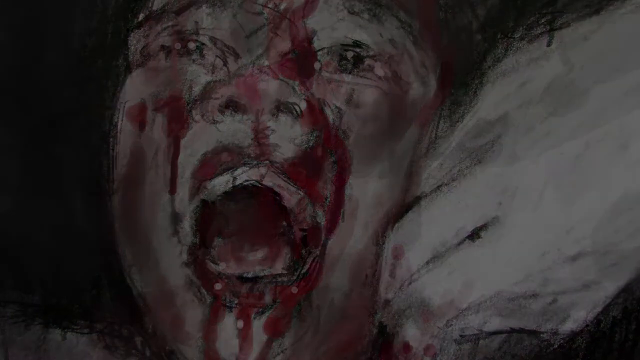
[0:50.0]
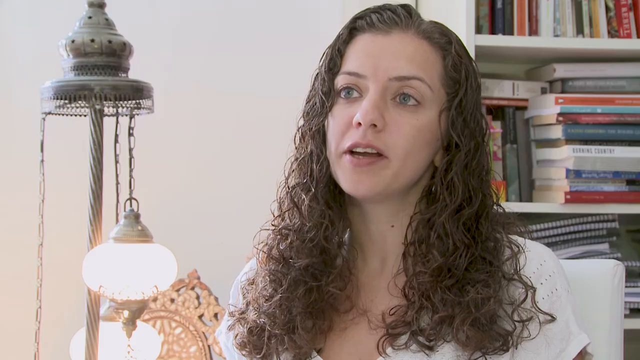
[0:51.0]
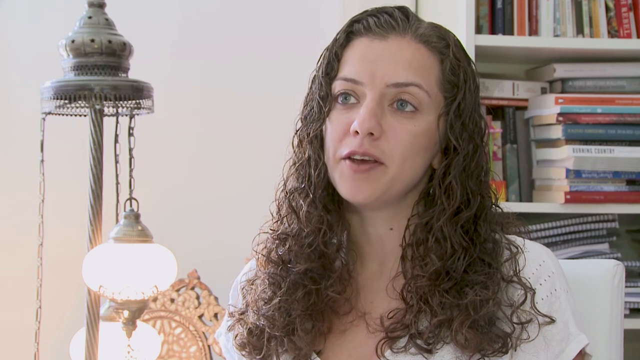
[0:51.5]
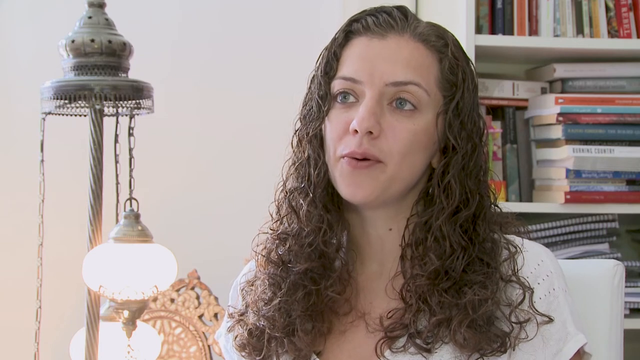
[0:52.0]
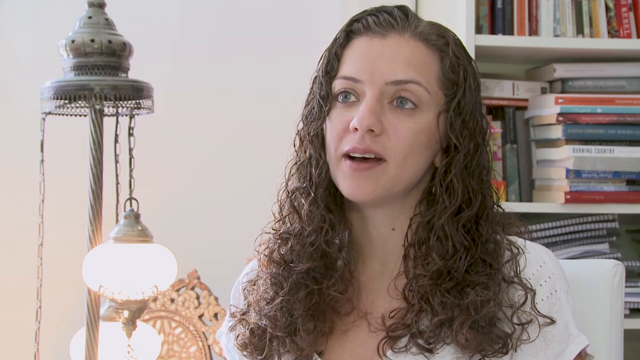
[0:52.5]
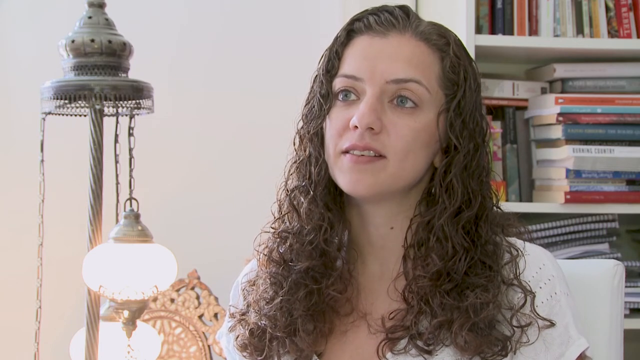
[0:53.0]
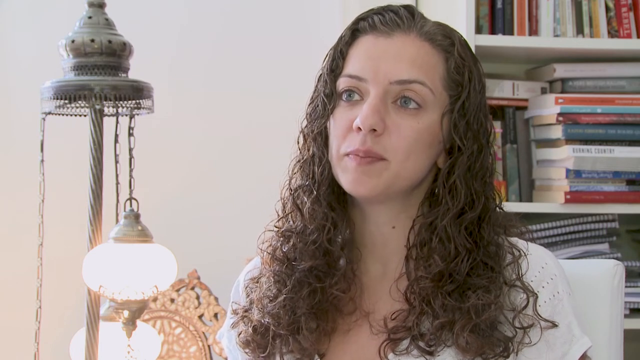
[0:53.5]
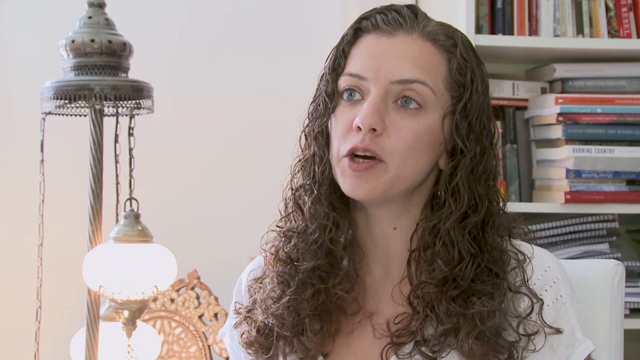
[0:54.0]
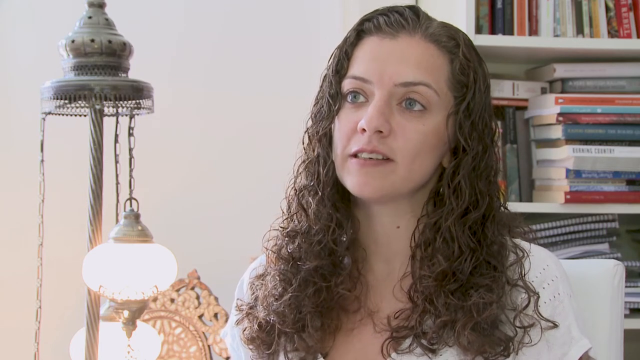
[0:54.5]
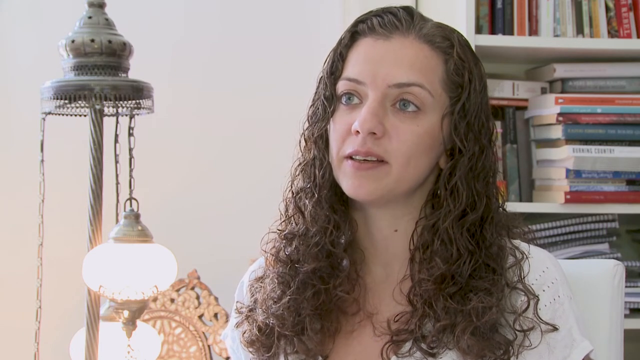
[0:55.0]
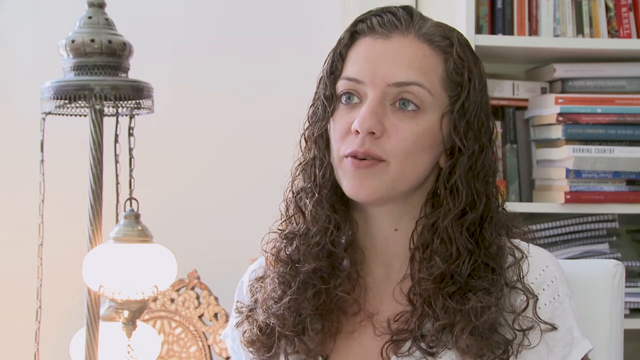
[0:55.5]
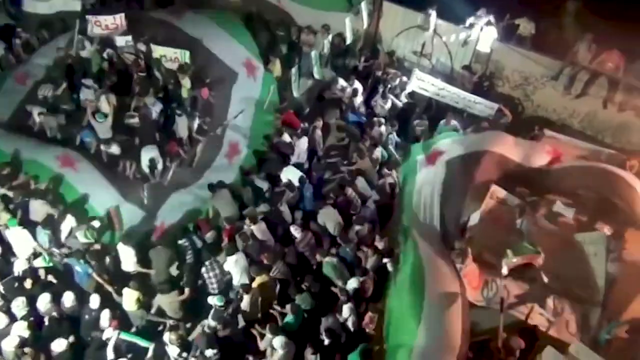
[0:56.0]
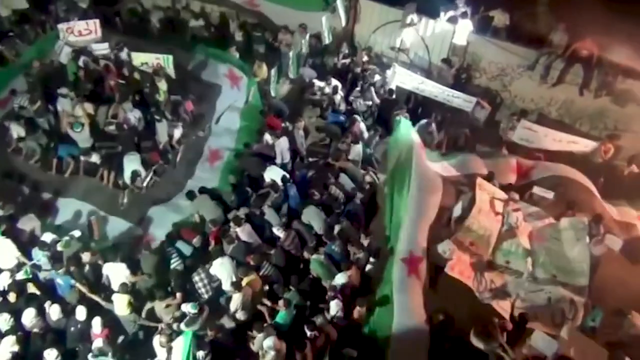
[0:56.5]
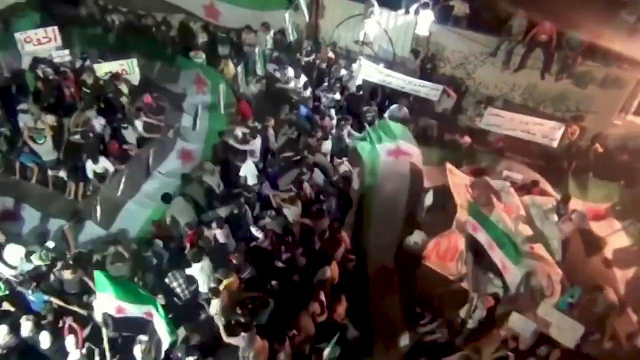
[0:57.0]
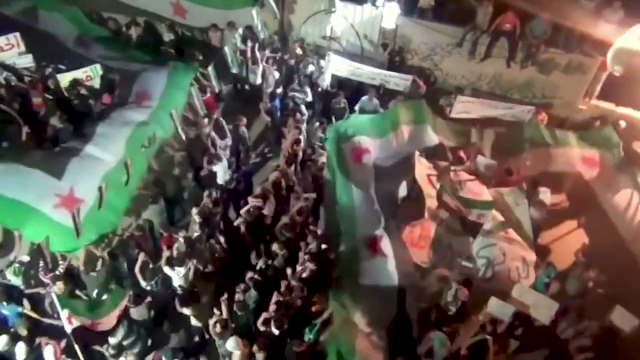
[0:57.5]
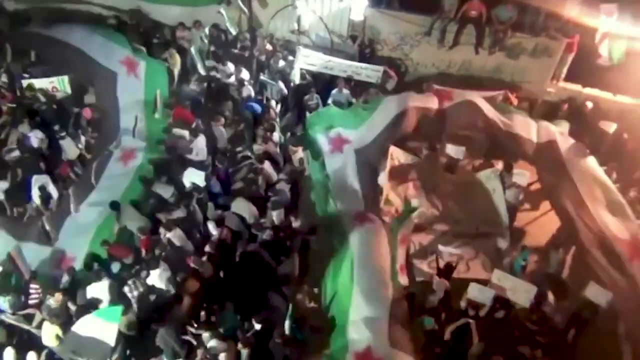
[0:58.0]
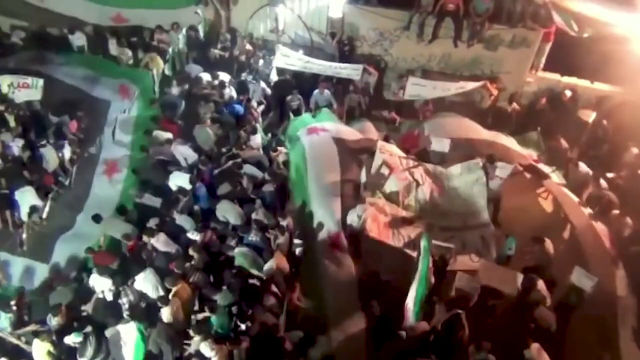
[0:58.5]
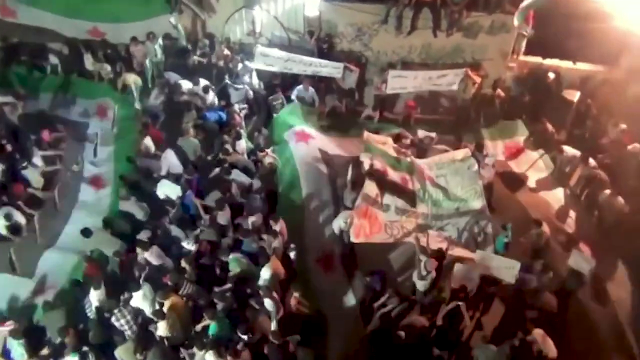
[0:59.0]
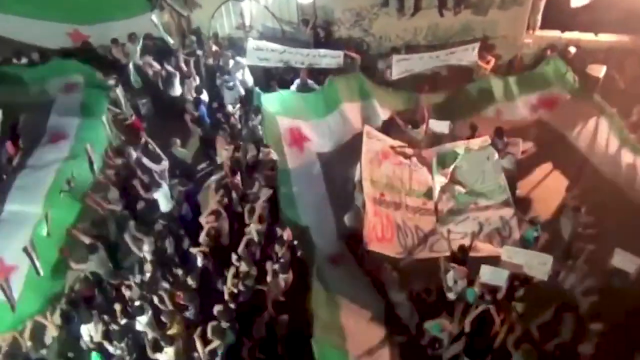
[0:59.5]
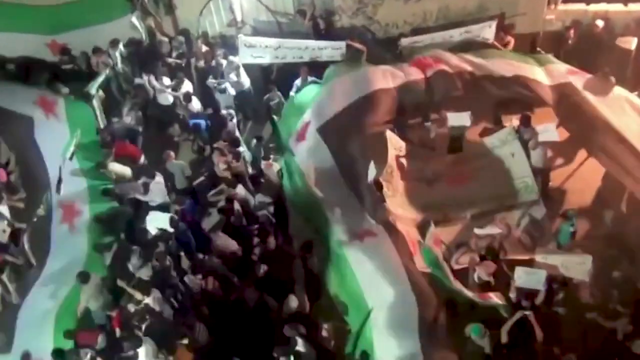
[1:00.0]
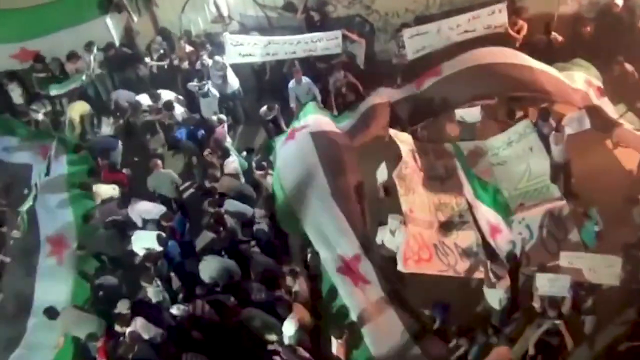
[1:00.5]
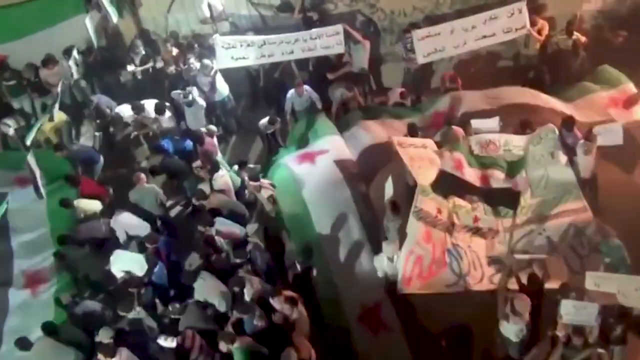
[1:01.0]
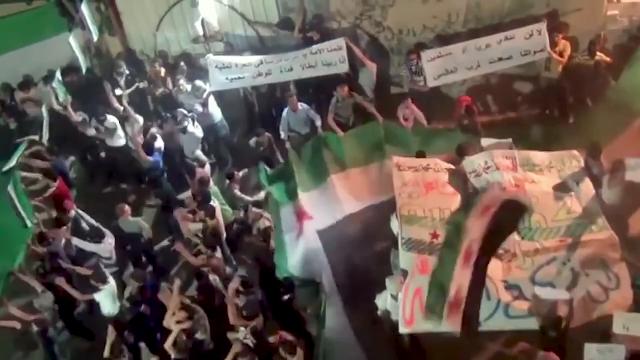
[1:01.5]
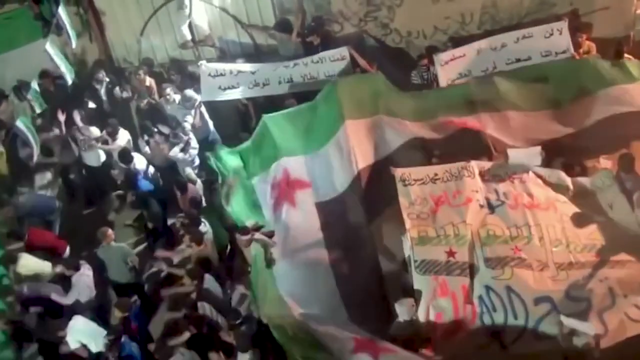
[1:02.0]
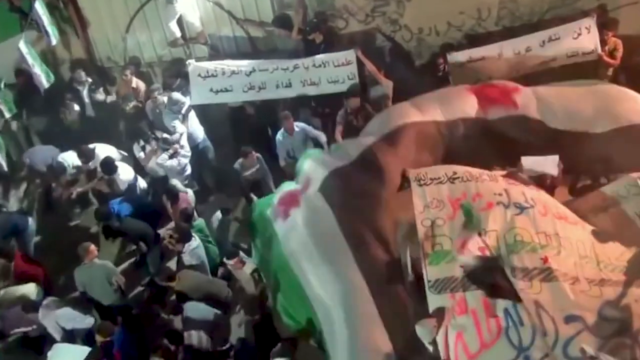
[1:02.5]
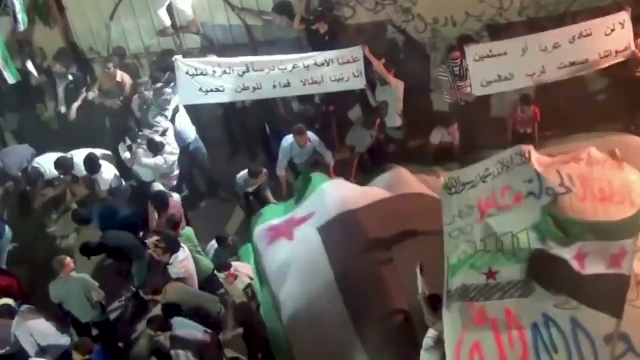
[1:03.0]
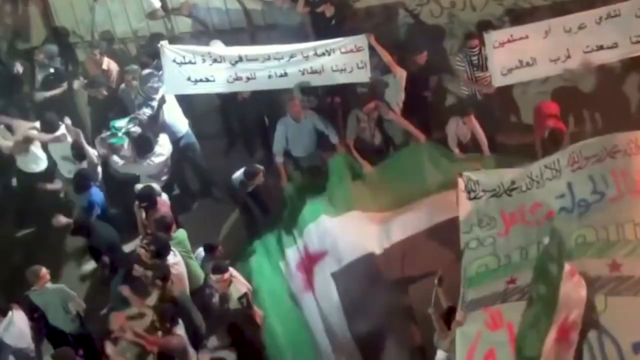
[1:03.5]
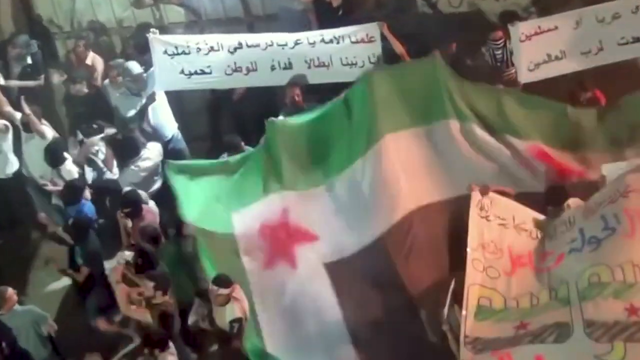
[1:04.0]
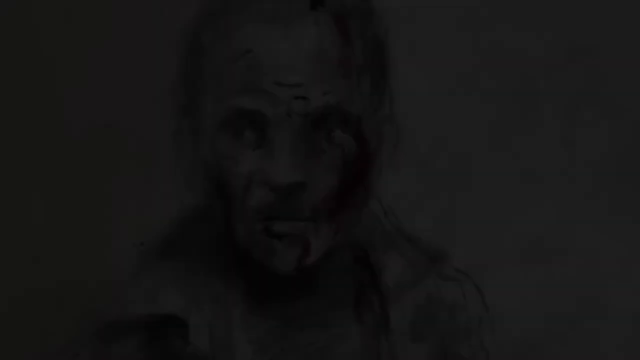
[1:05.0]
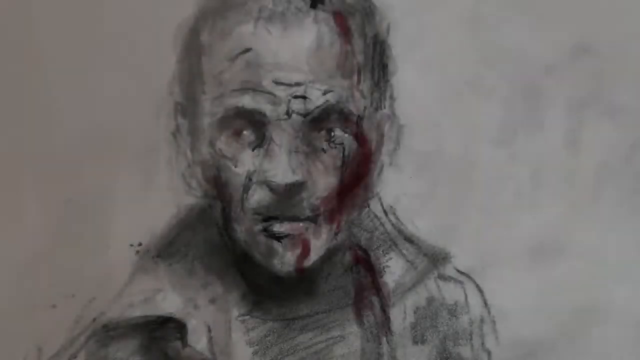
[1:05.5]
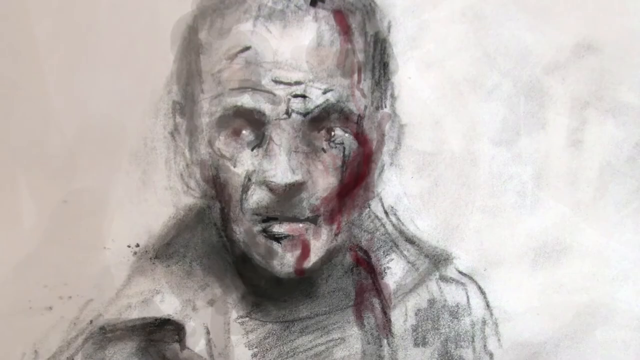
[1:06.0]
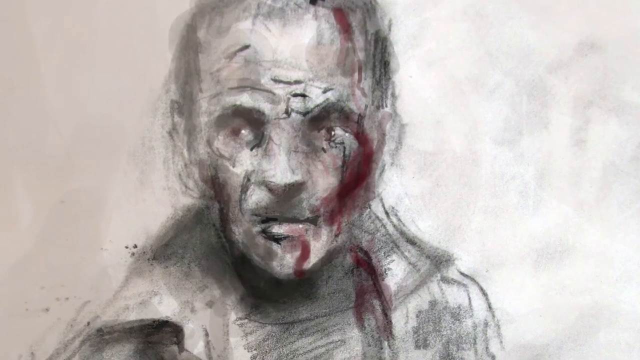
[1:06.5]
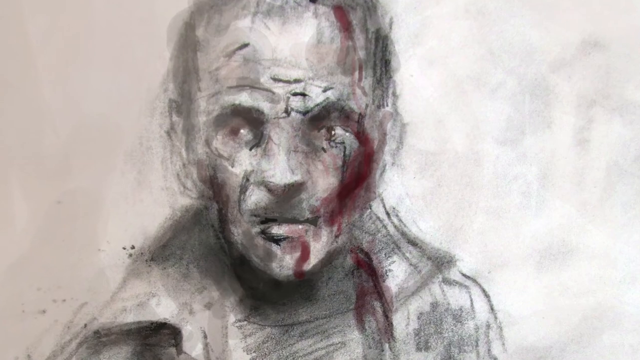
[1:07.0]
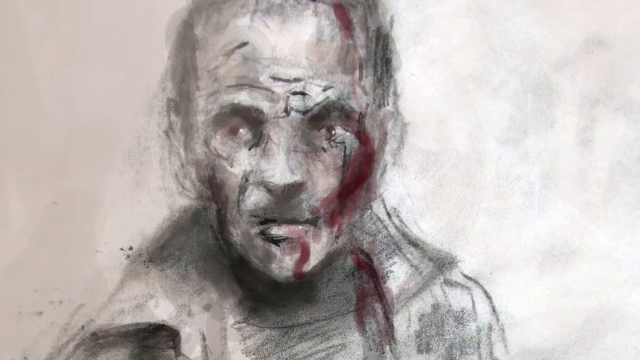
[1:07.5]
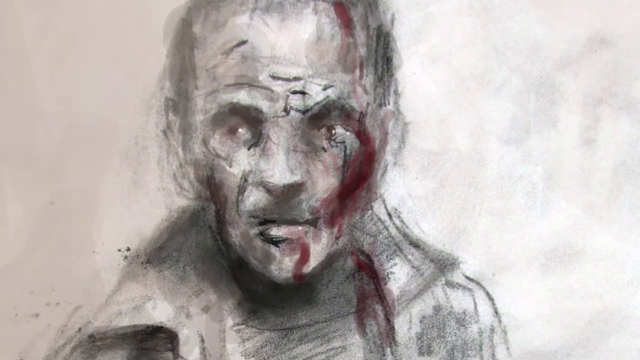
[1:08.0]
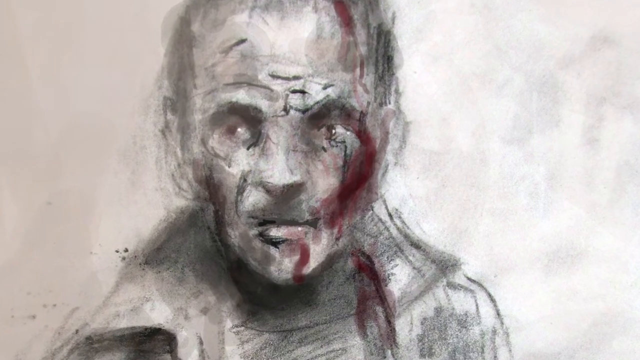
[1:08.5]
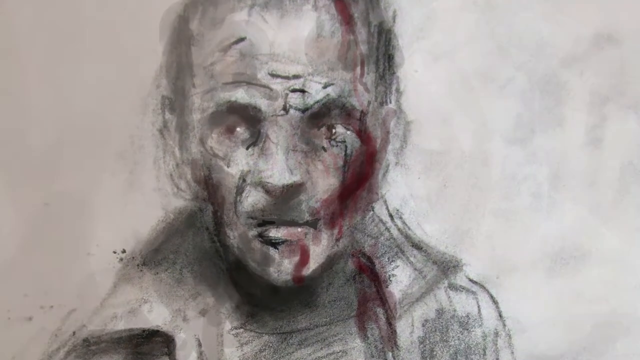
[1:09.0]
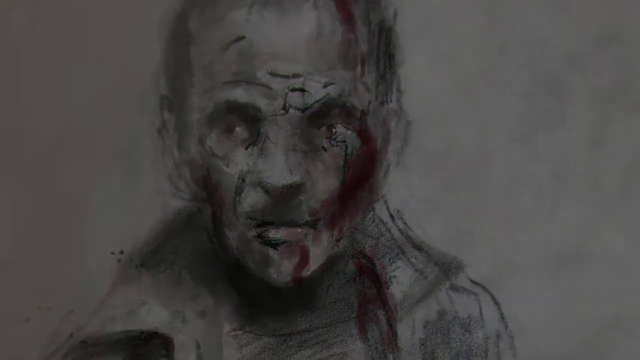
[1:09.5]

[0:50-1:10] A woman is being interviewed. The scene looks like a war scenario. Palestine flags are being flown all over, some with Arabic writing on them; the flags are green and black with a red star. There is blood, and a child covered in a lot of blood is screaming for help. The woman being interviewed is in an office with books in the background. A crowd of people flies the Palestine flag, a man has blood over half of his face, and a child screams with blood all over the face. The footage apparently relates to a current war.